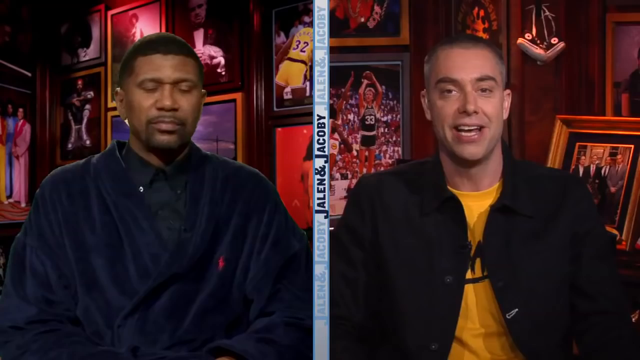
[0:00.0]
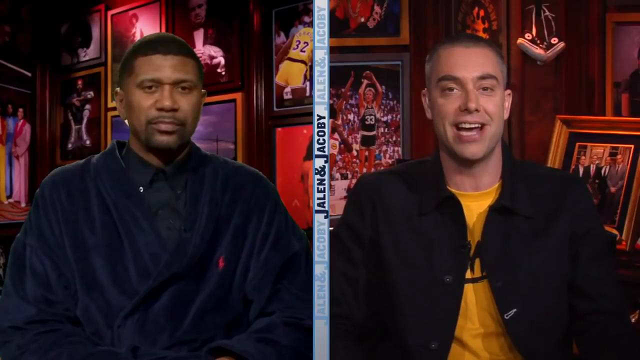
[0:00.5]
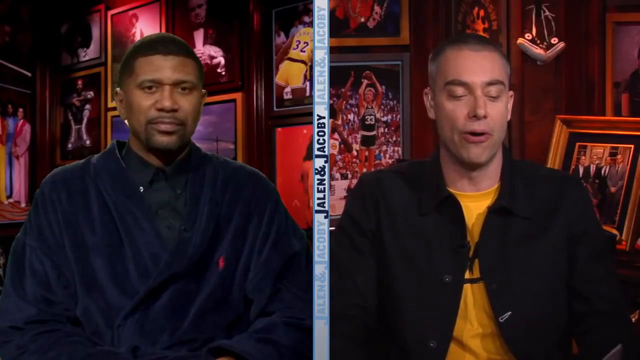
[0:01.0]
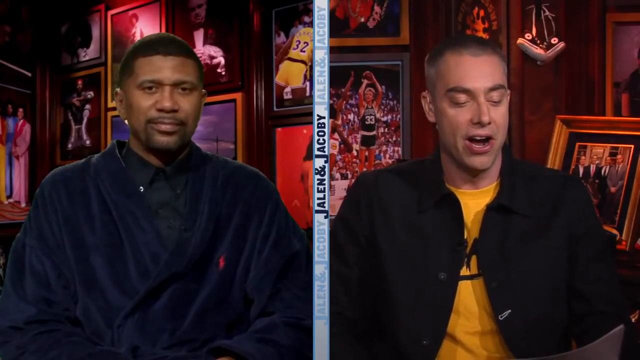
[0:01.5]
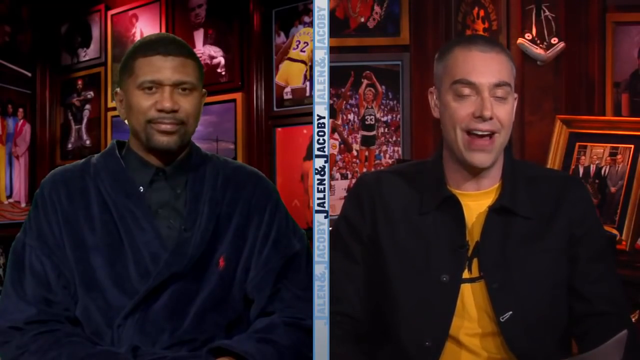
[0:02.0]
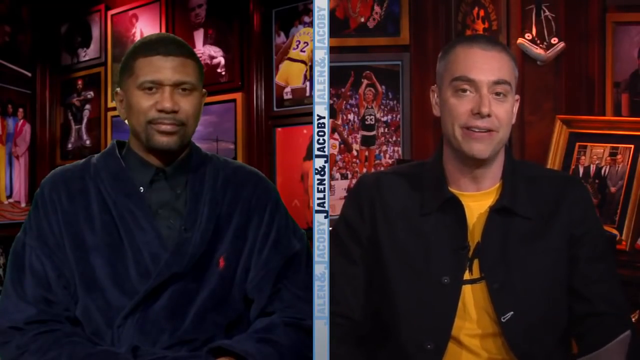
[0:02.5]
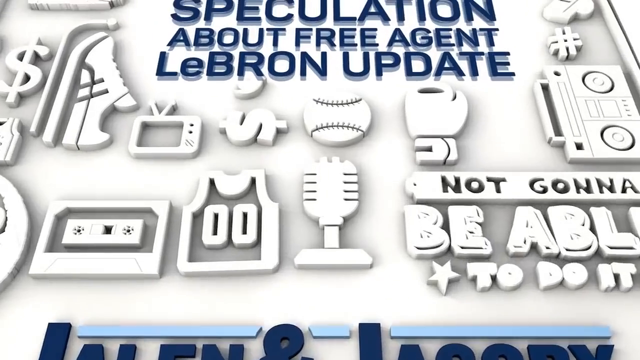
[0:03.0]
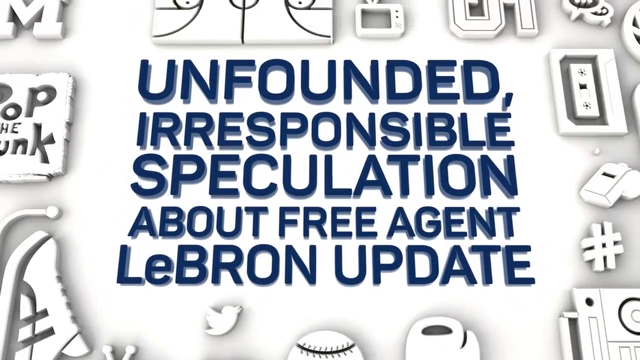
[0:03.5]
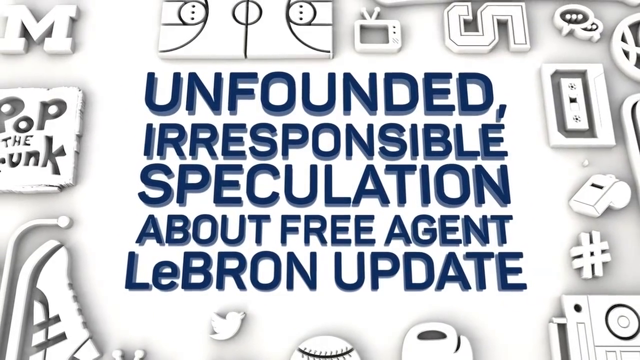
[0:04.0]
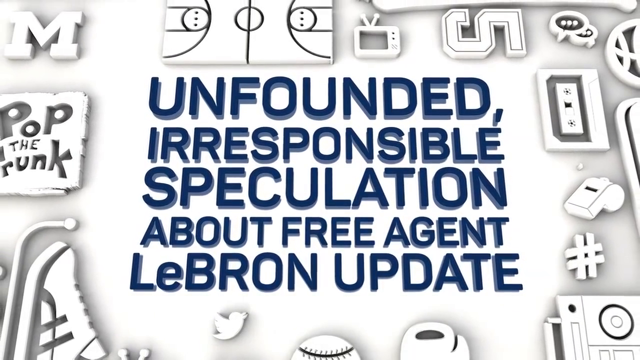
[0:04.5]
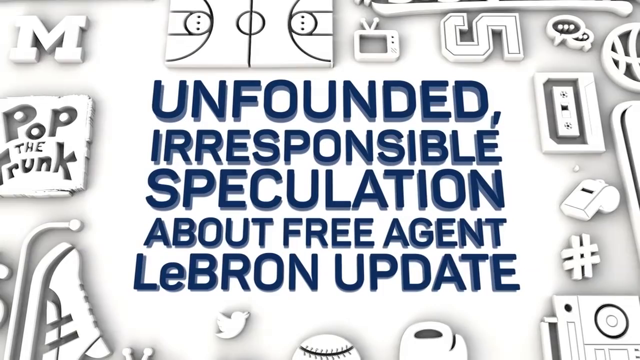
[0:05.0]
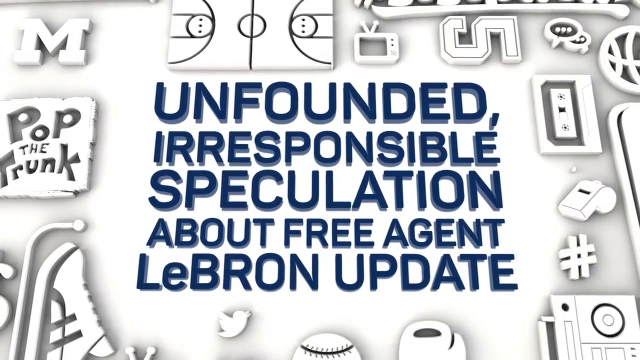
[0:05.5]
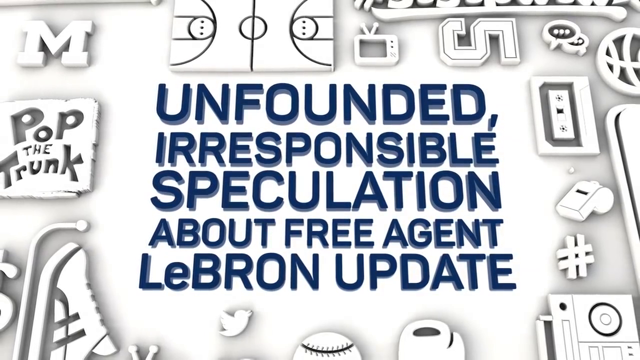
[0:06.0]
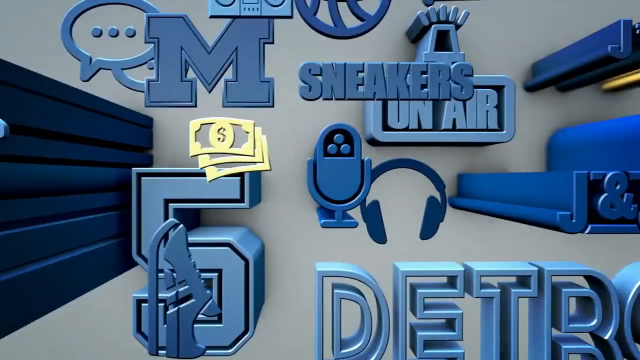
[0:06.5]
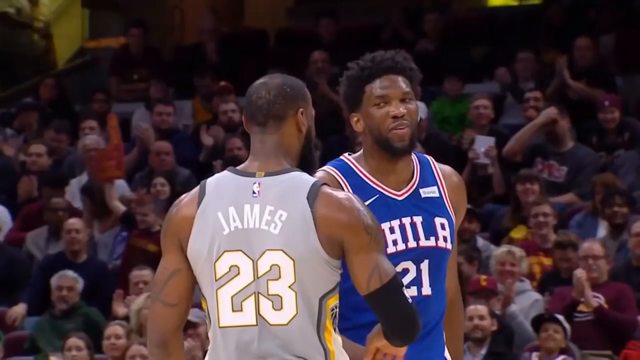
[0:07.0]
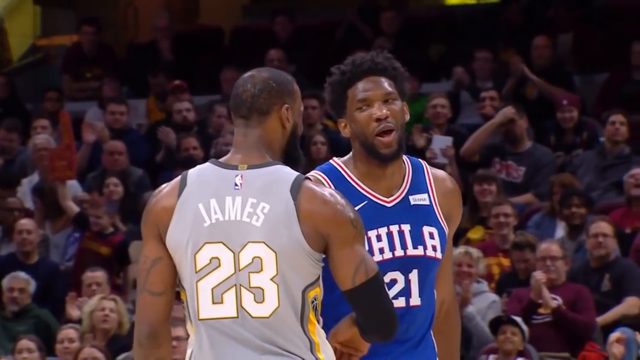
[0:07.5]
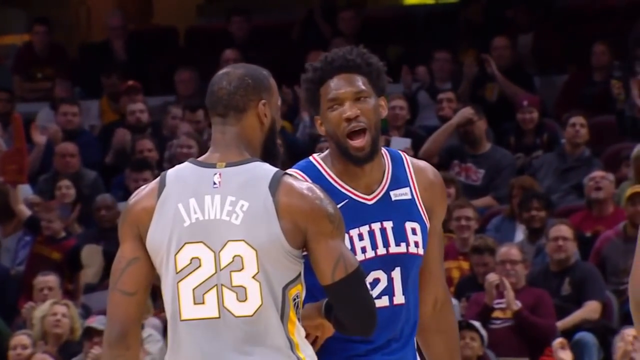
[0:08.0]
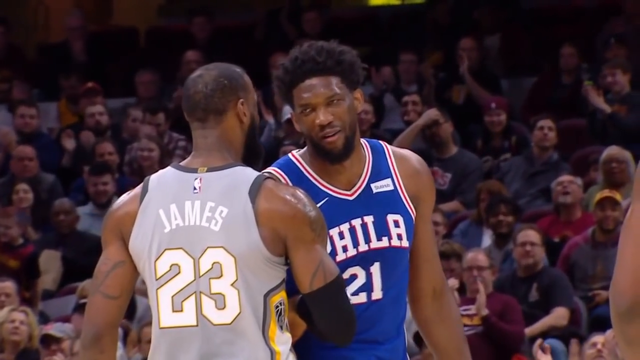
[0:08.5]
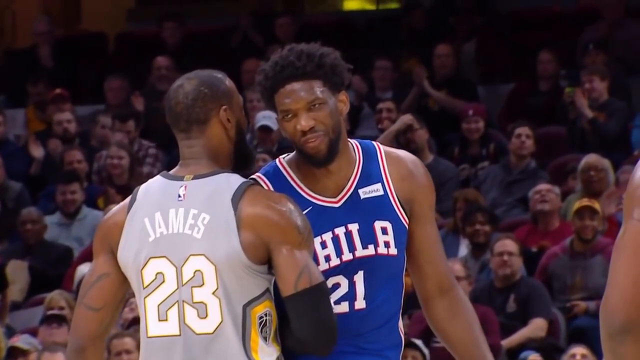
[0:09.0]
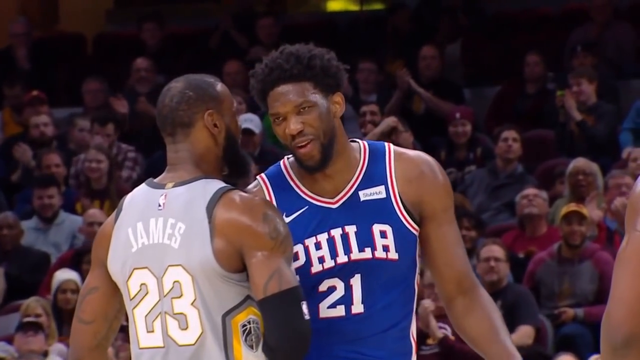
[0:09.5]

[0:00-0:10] What appears to be a sports show opens with a split screen: former Michigan and NBA player Jalen Rose is on the left-hand side, and another individual is on the right. The two appear to be bantering back and forth, with a lot of sports memorabilia in the back. The video then goes to a page with a white background that reads "unfounded irresponsible speculation about free agency LeBron James." Next comes footage of LeBron James wearing his number 23, next to Joel Embiid of the Philadelphia 76ers.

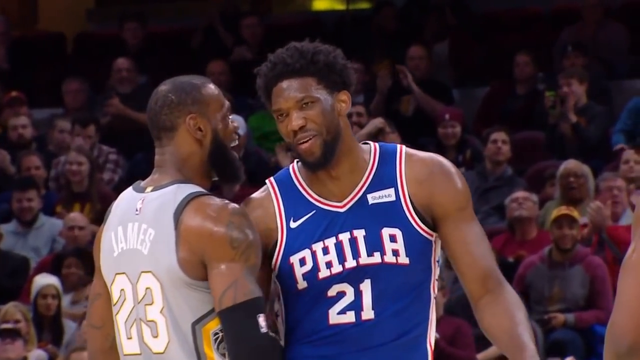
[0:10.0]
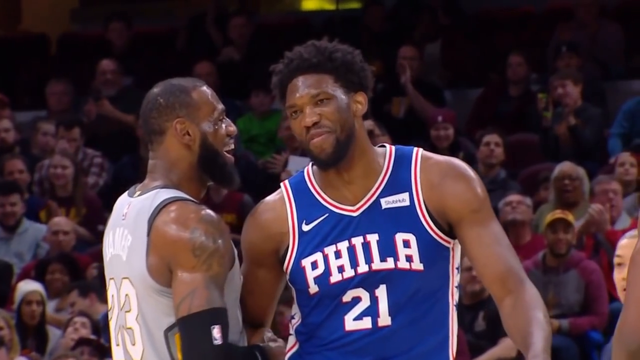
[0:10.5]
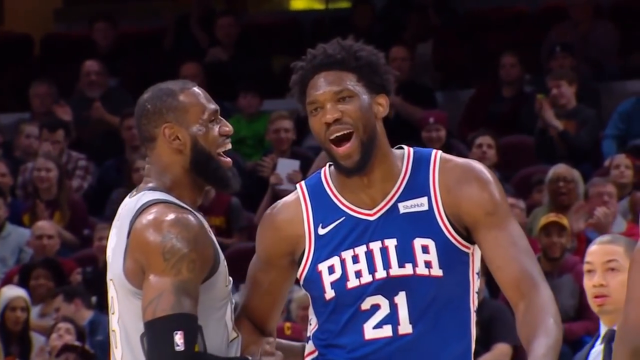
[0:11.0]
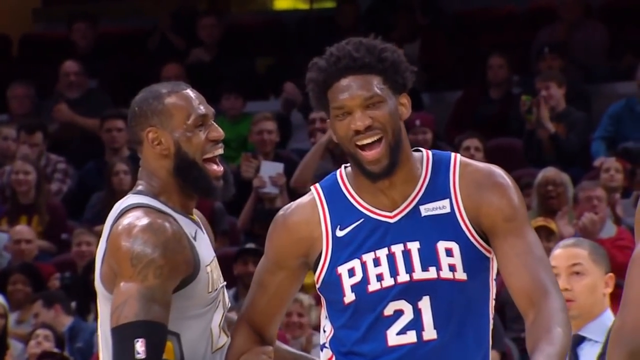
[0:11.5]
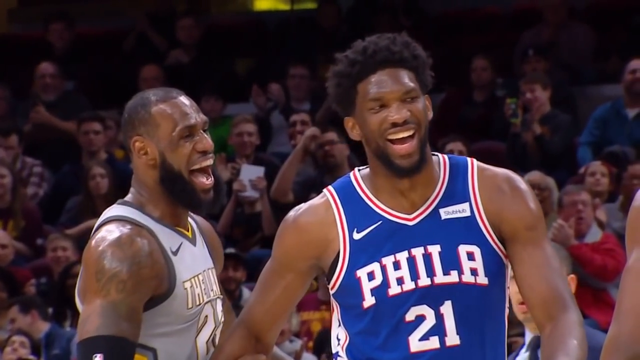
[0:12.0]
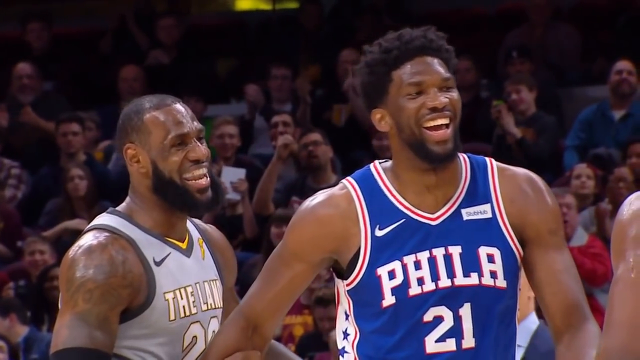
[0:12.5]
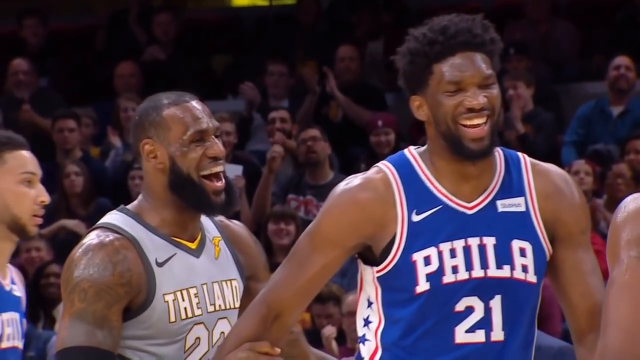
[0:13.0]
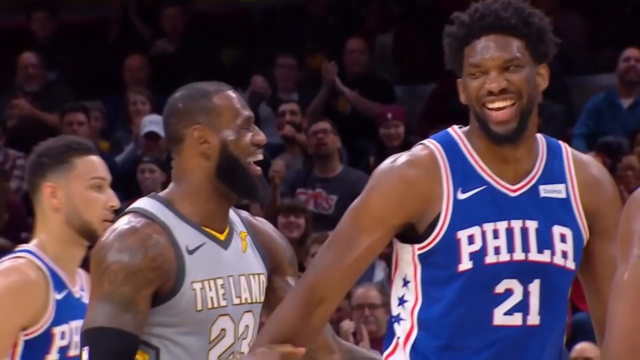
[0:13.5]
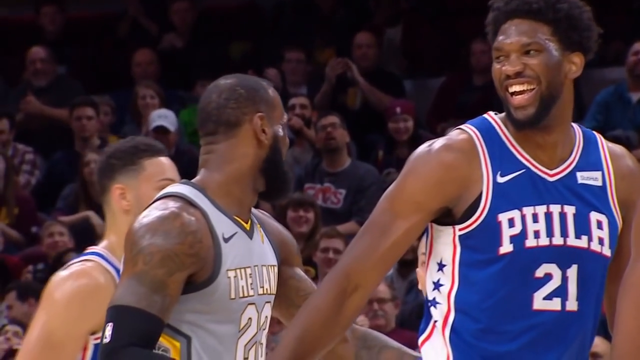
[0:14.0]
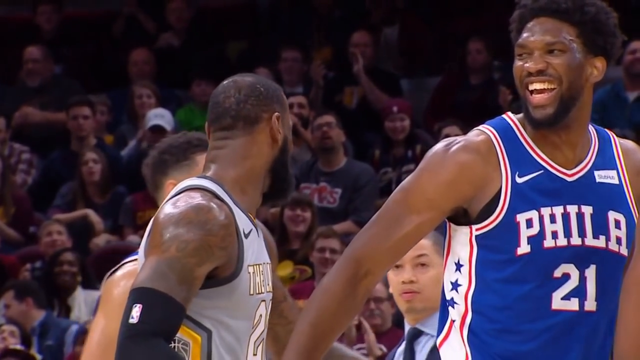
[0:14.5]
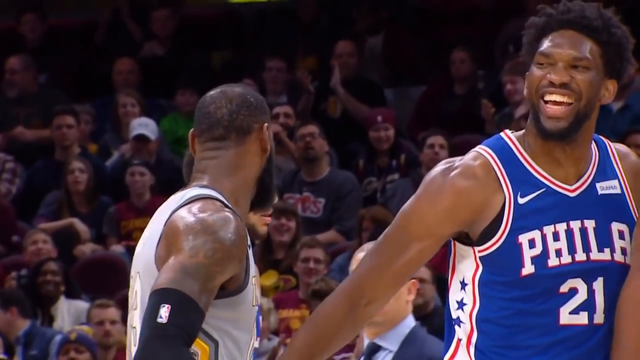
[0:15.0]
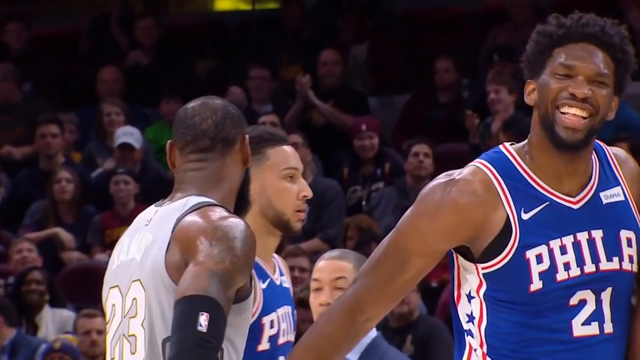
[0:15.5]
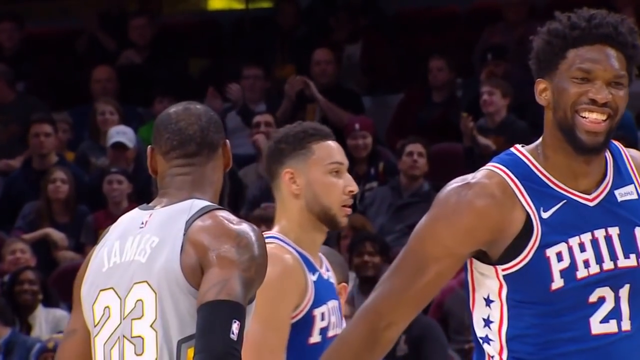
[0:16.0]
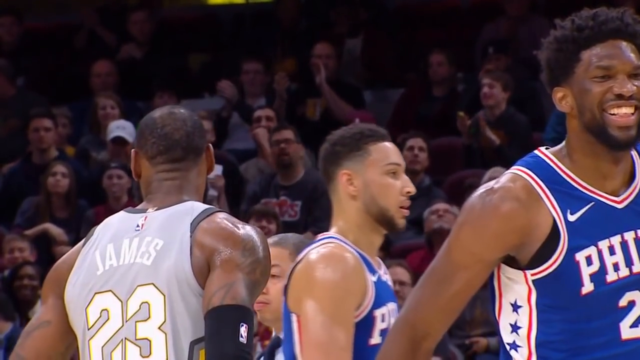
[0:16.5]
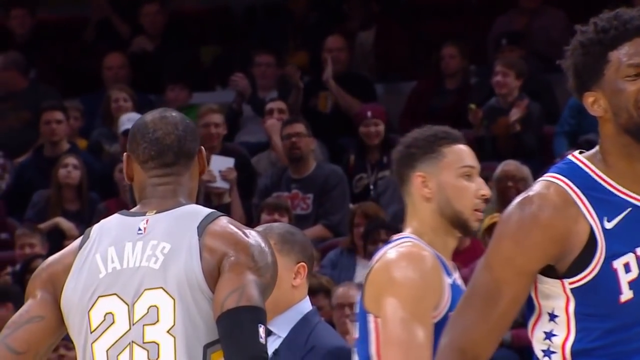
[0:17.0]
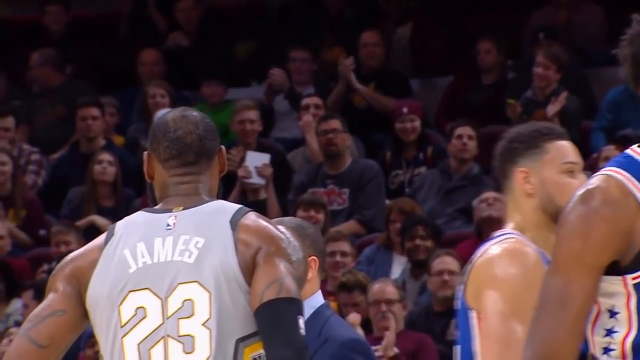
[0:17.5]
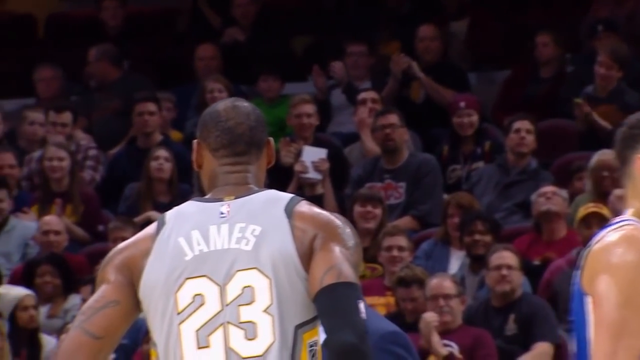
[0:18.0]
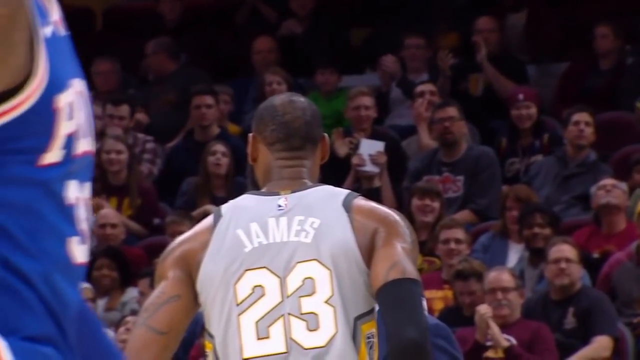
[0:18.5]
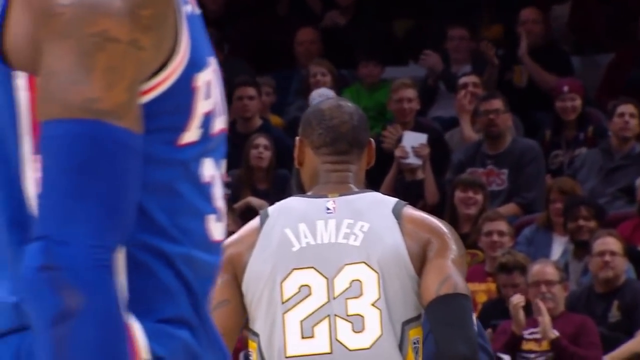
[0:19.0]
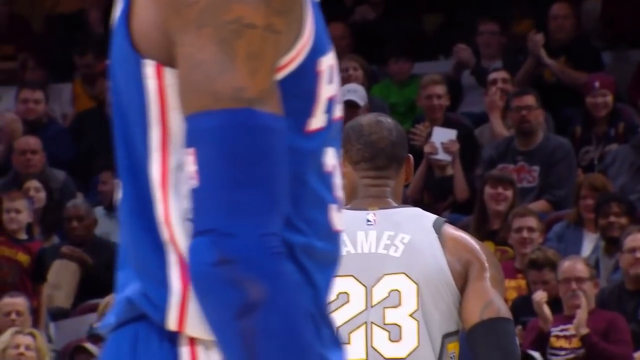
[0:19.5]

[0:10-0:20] The footage is from a game between the Los Angeles Lakers and the Philadelphia 76ers, with spectators in the background. LeBron James, in his Lakers outfit, seems to be having a little playful banter on the court with the 76ers' Joel Embiid, number 21. In the background is Tyrone Liu, the coach of the Lakers at that time. Ben Simmons, another 76ers player, walks up as James appears to be laughing and looking back toward his bench in a bit of jubilation.